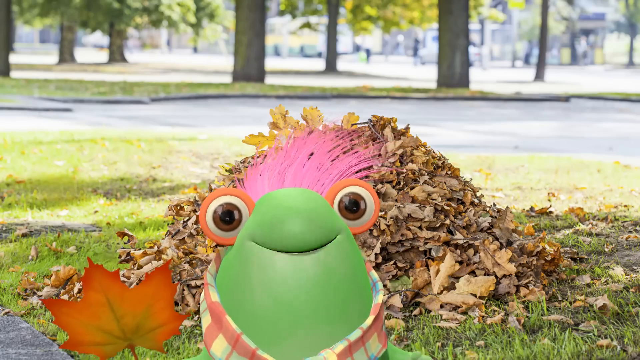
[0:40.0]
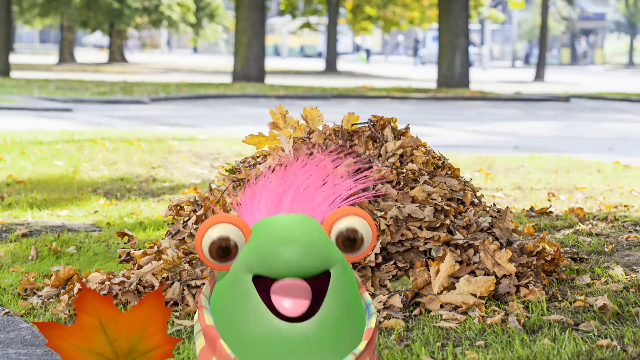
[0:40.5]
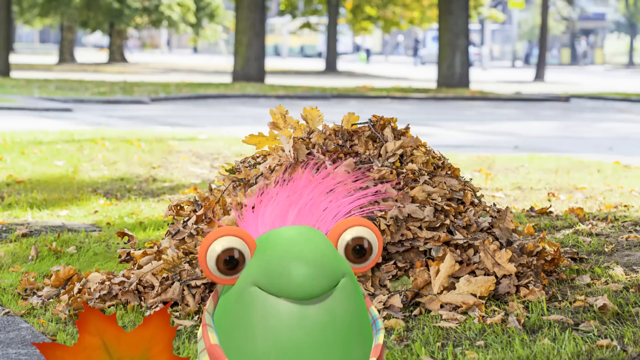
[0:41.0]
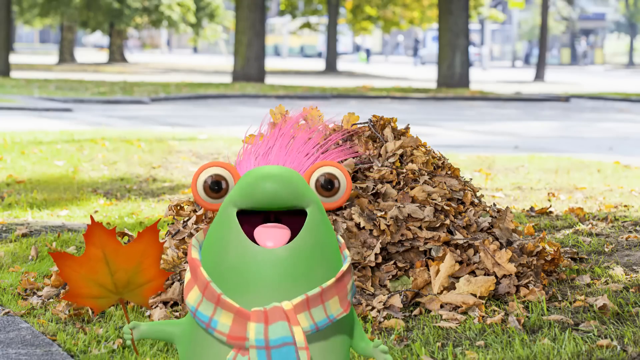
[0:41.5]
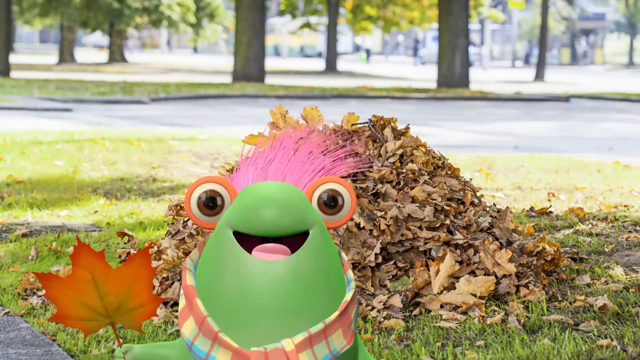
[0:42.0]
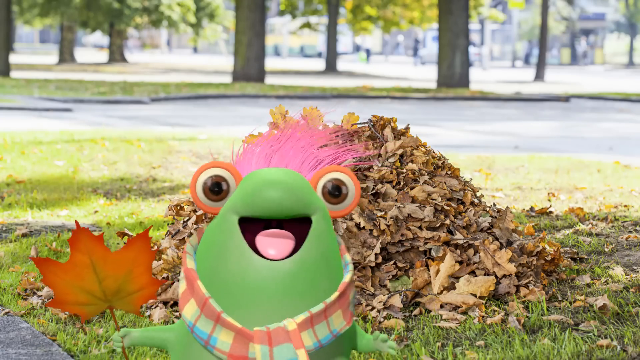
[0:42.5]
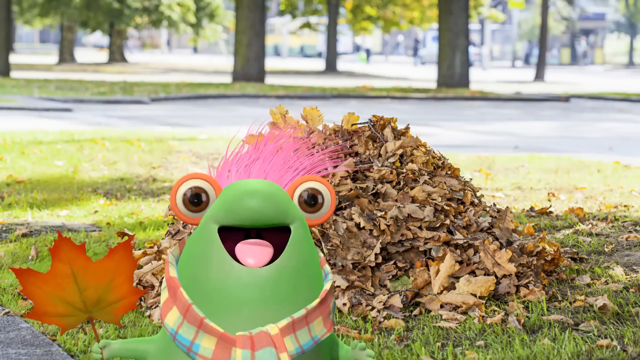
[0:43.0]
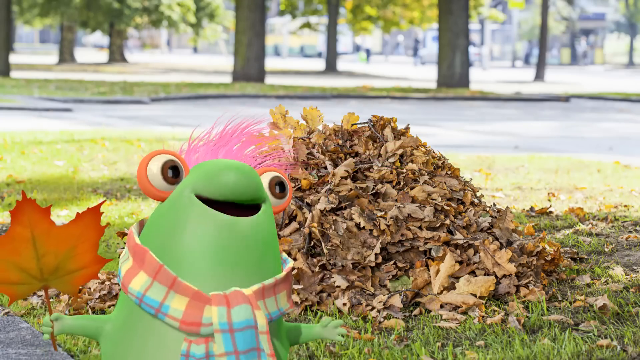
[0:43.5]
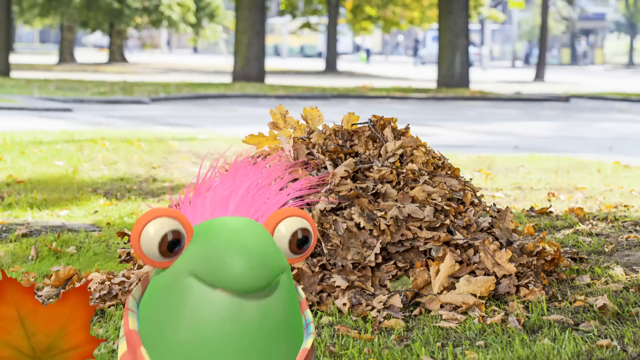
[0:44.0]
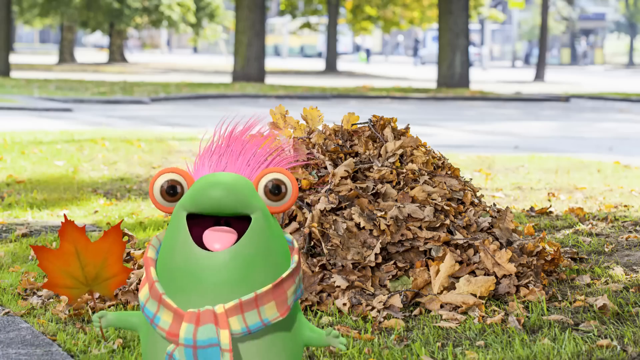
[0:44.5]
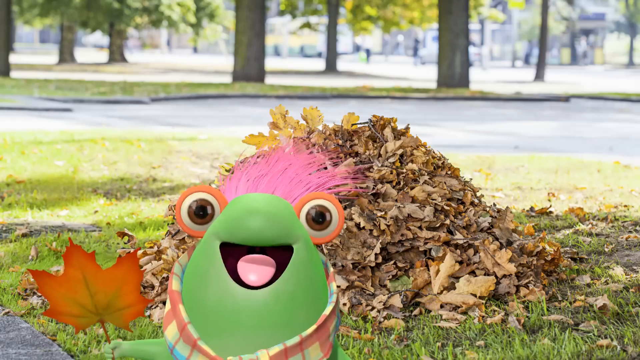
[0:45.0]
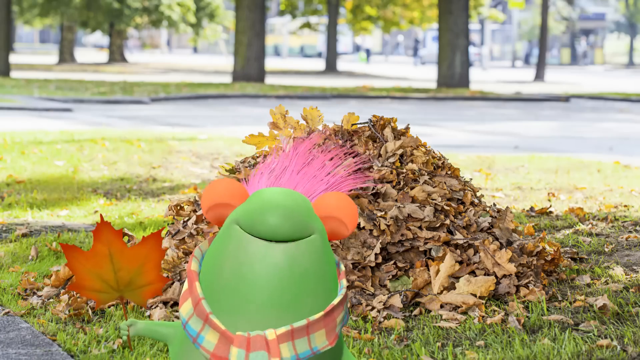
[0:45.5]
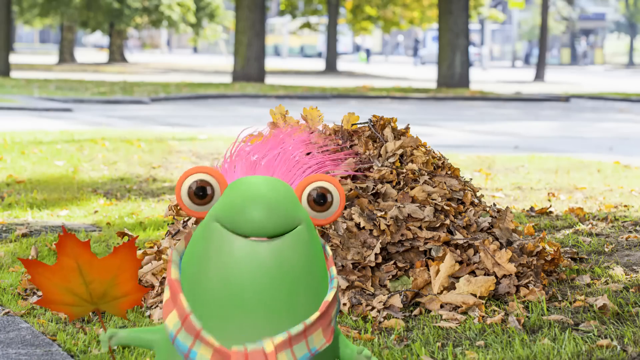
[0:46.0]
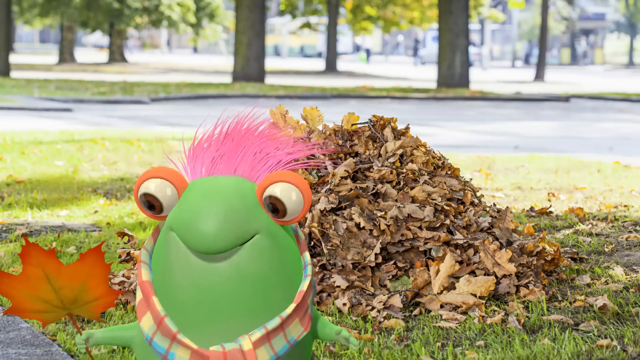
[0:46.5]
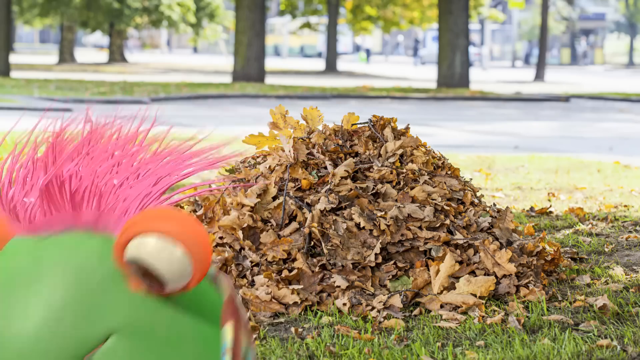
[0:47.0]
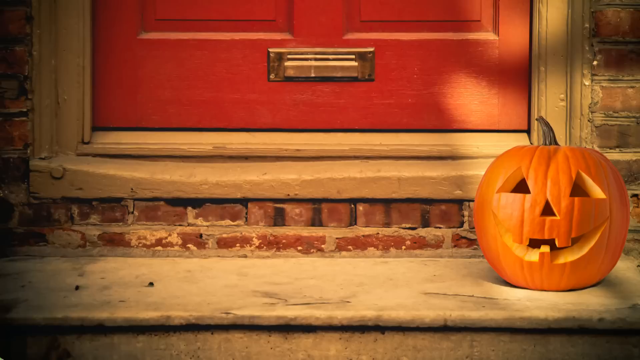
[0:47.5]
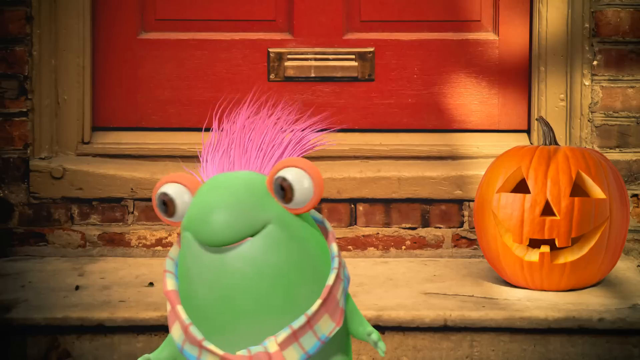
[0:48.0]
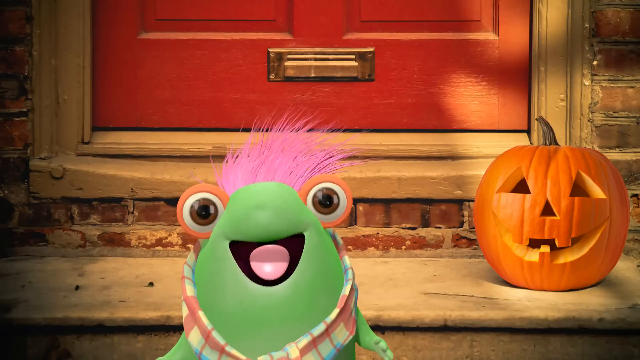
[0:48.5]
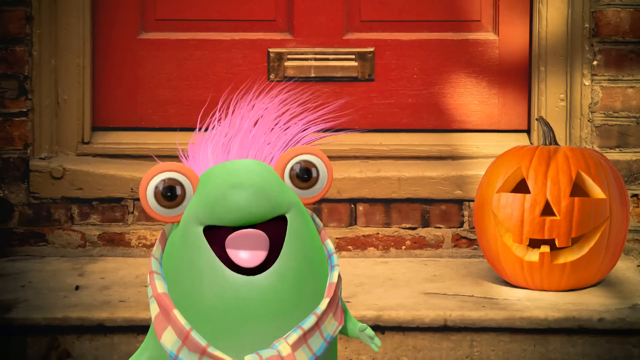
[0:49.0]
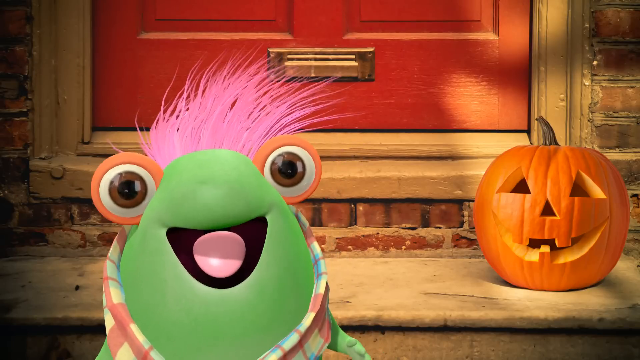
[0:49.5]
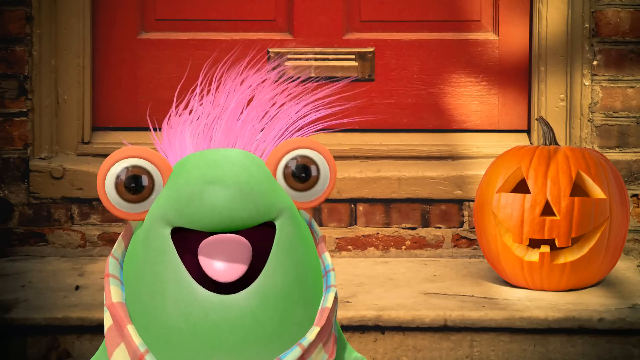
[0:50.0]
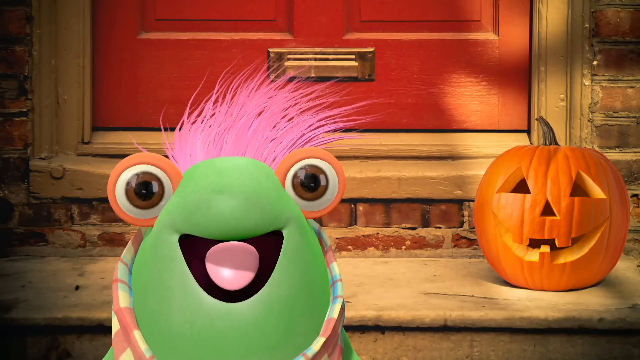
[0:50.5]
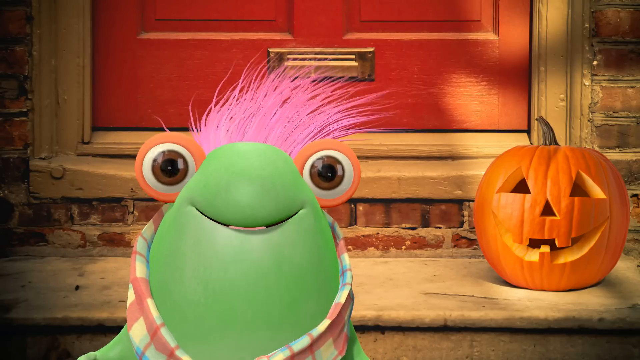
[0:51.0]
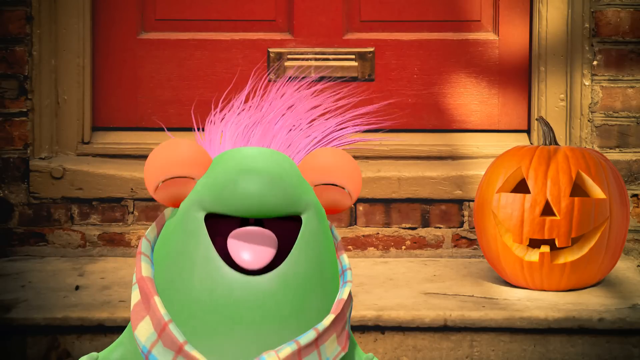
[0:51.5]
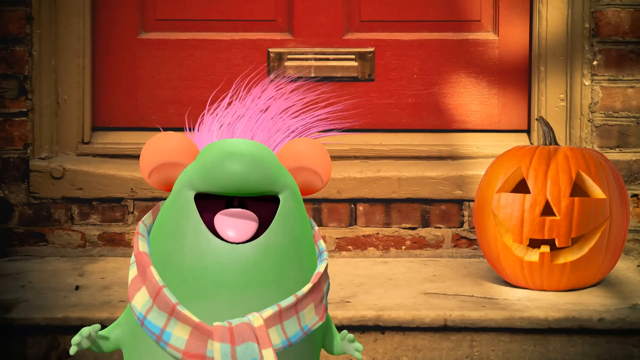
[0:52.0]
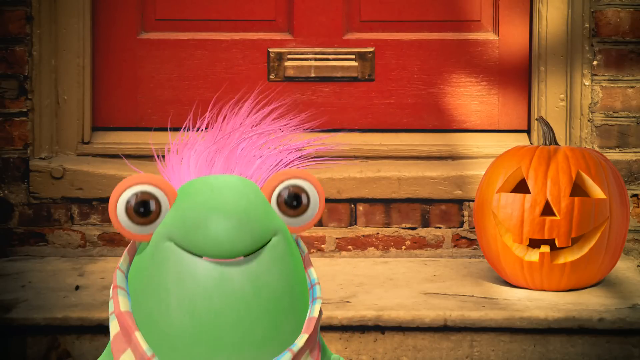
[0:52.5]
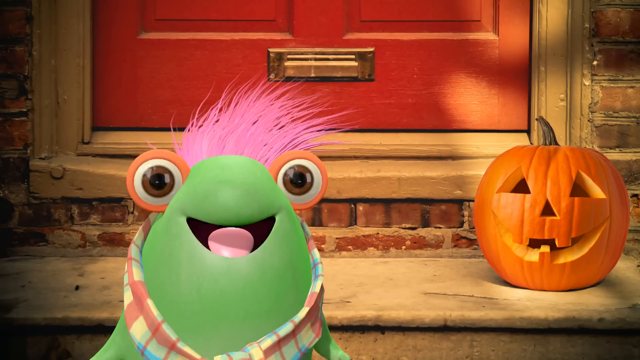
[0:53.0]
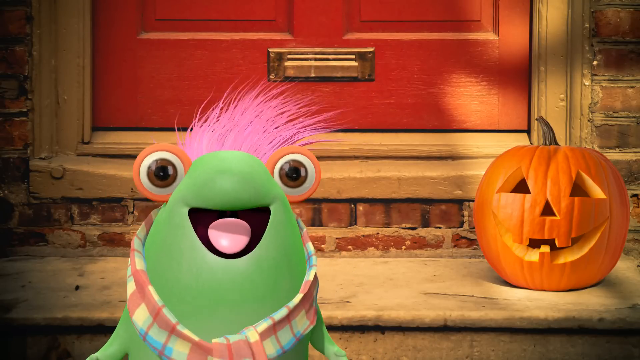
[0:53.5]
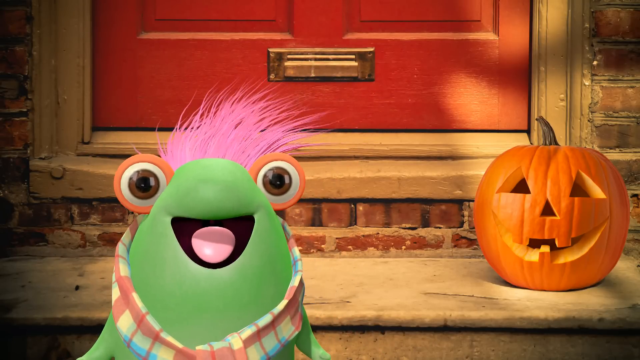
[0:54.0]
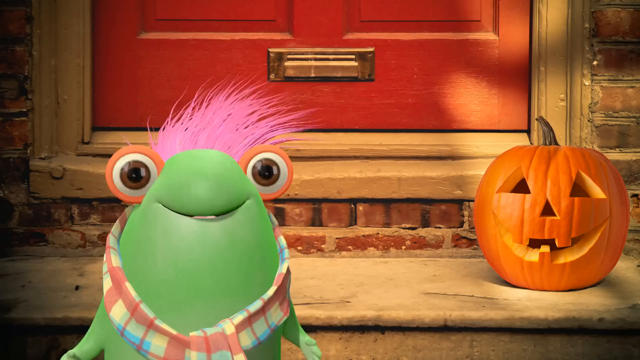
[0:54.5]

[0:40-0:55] The green character with orange-rimmed eyes and really big brown eyeballs looks very happy, talking toward the camera while holding up an orange leaf. He looks really short, as if ducking down, then springs up a little so more of his body is visible. He keeps looking at the camera while talking, looks up behind him, then back at the camera, moving around as he talks. His eyes then look downward and he walks slightly off the screen. With him gone, only a pile of greenish-brown leaves on a green grassy area is visible, with shadows in the distance, trees in the background, and what looks like a parking lot and a road. The scene changes: the green character with the orange and brown eyes is standing in front of a red door that appears to have a letter box on it. A carved orange pumpkin has light bouncing onto it. The wall is made of brick, and the pumpkin is sitting on a step. The character keeps talking to the camera, moving slightly and blinking a lot.